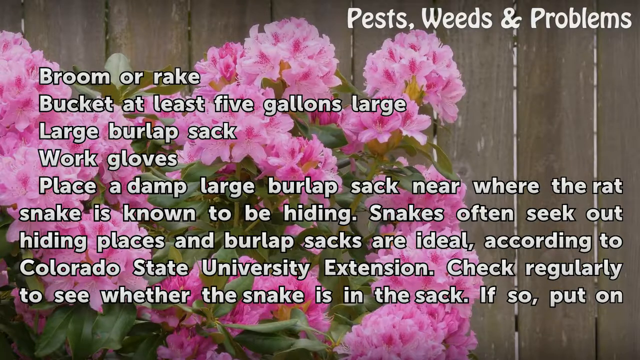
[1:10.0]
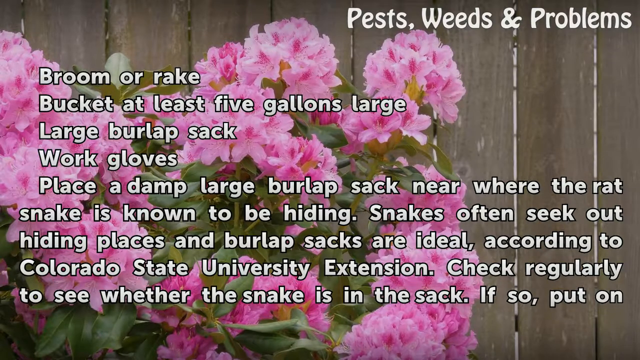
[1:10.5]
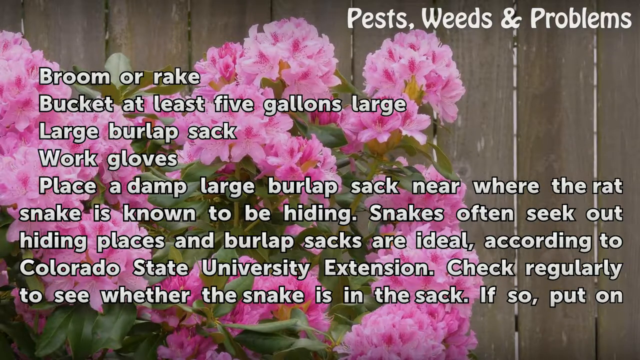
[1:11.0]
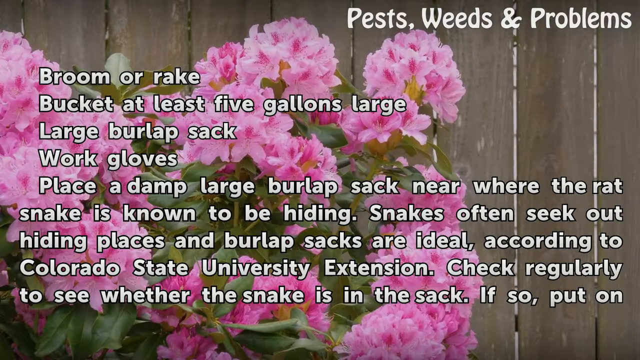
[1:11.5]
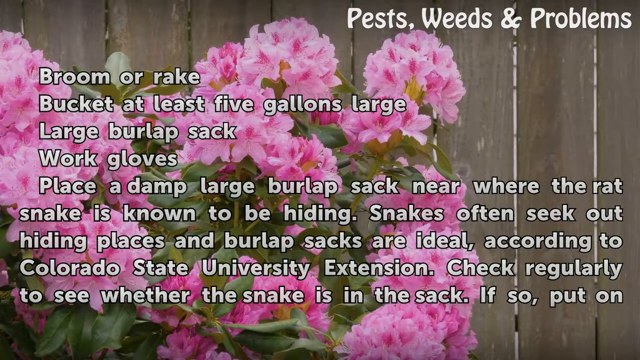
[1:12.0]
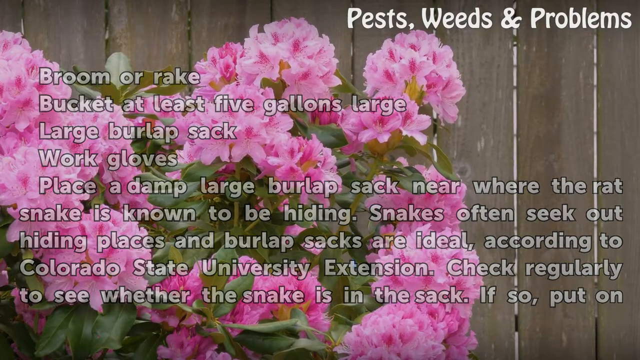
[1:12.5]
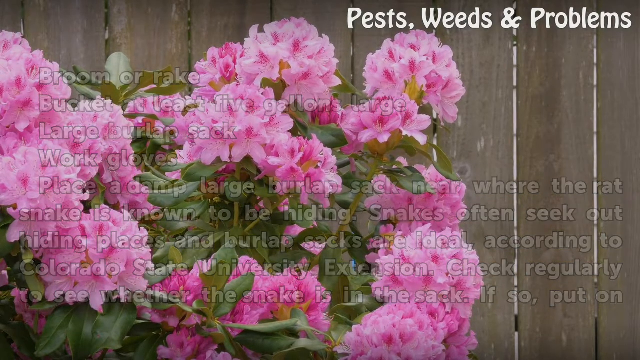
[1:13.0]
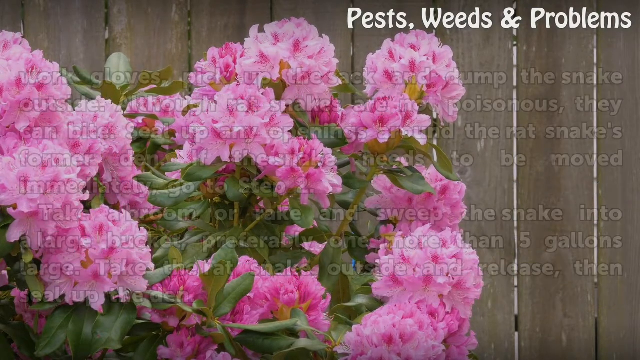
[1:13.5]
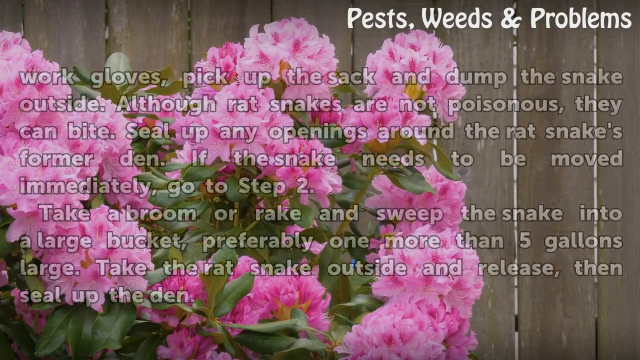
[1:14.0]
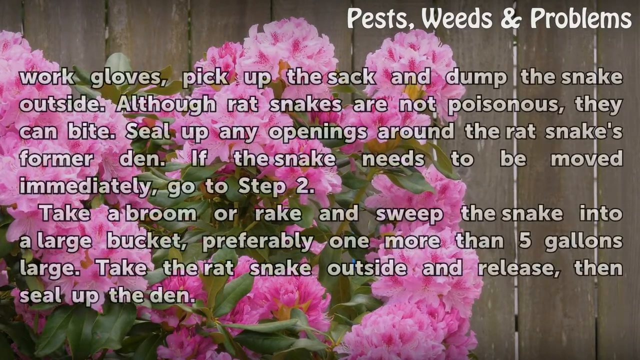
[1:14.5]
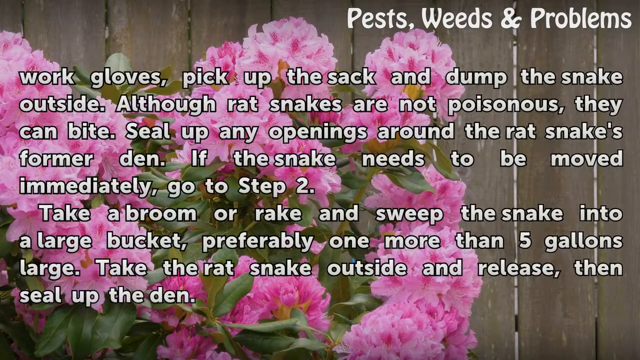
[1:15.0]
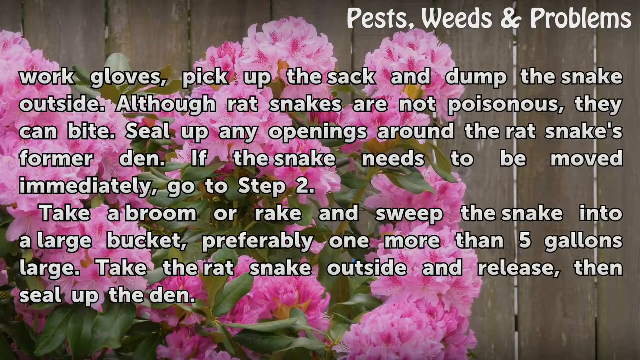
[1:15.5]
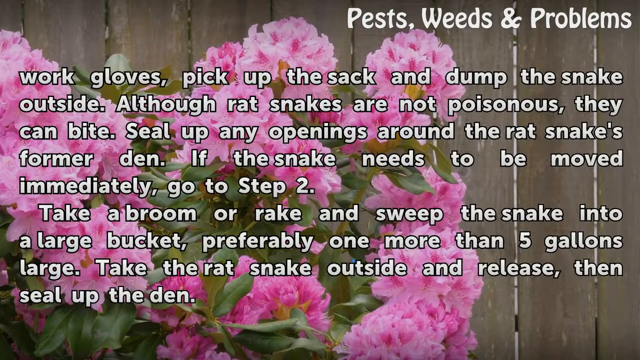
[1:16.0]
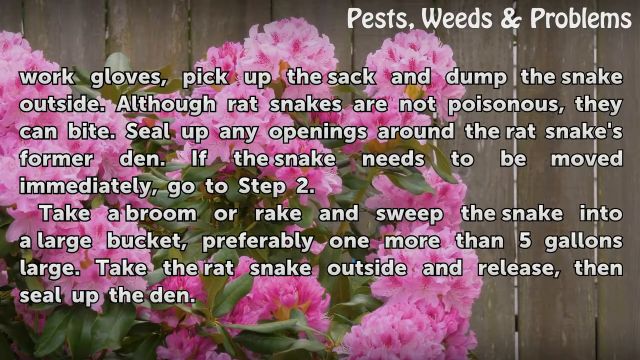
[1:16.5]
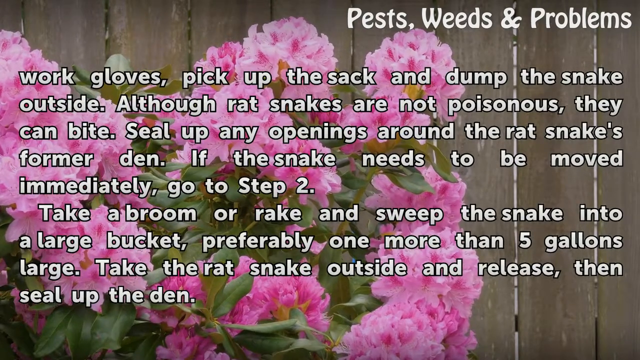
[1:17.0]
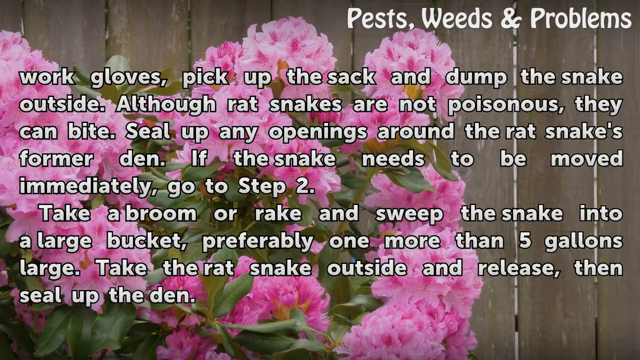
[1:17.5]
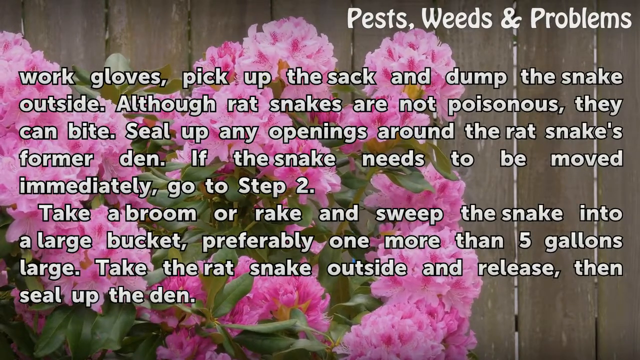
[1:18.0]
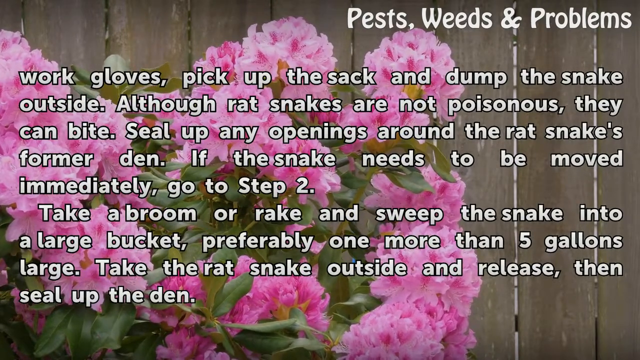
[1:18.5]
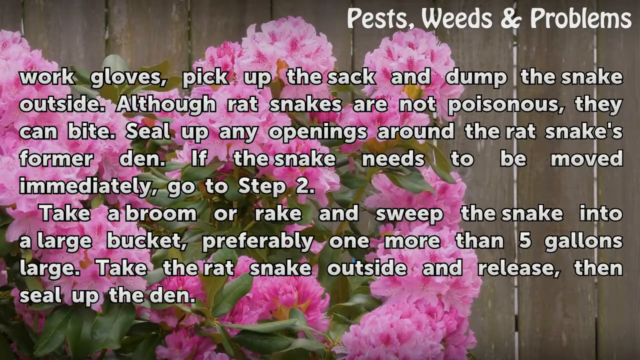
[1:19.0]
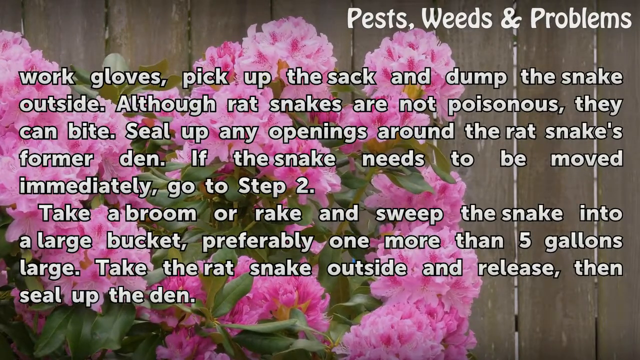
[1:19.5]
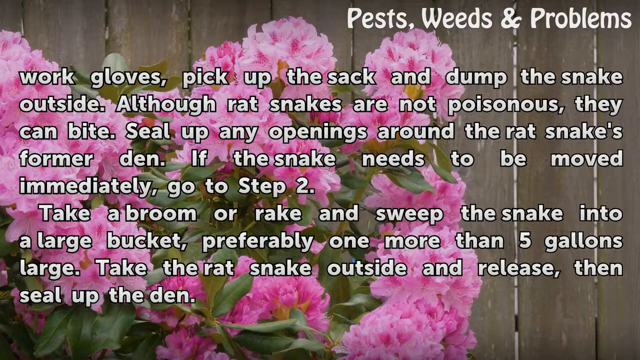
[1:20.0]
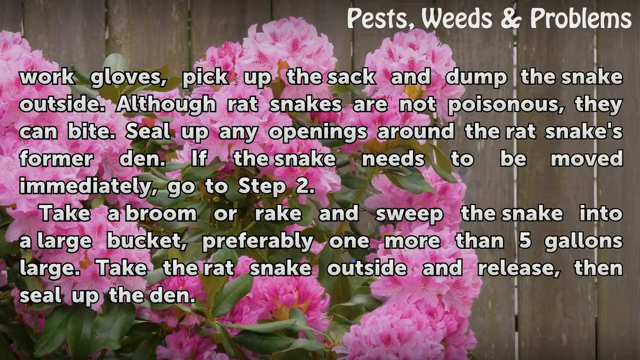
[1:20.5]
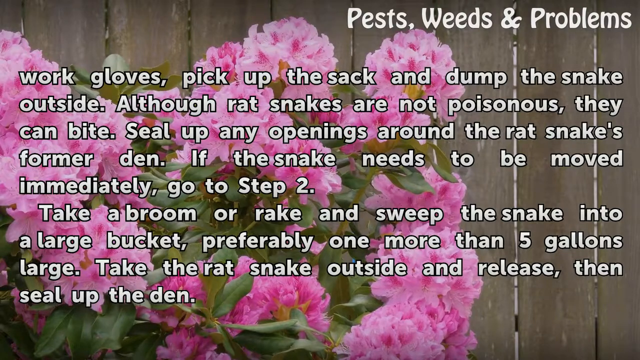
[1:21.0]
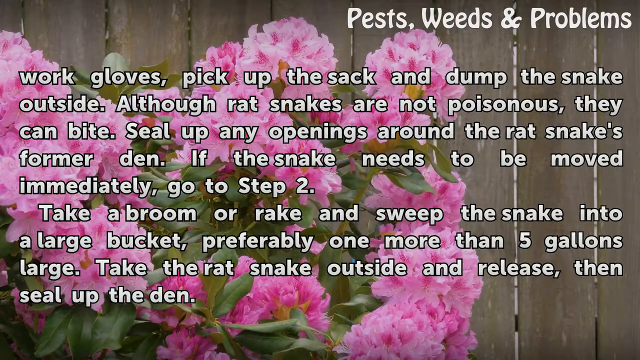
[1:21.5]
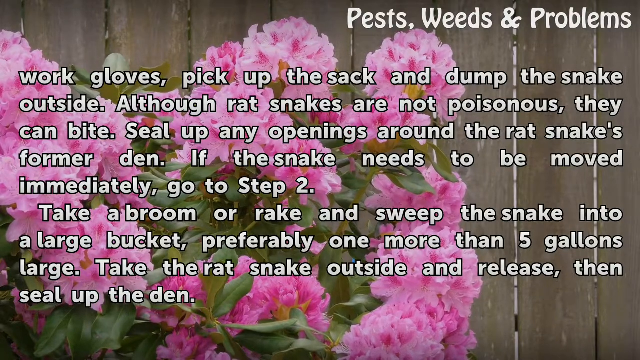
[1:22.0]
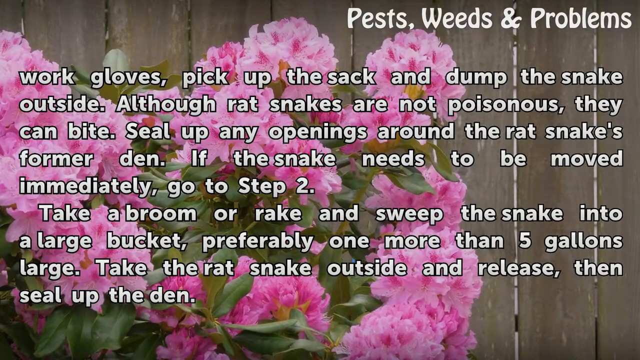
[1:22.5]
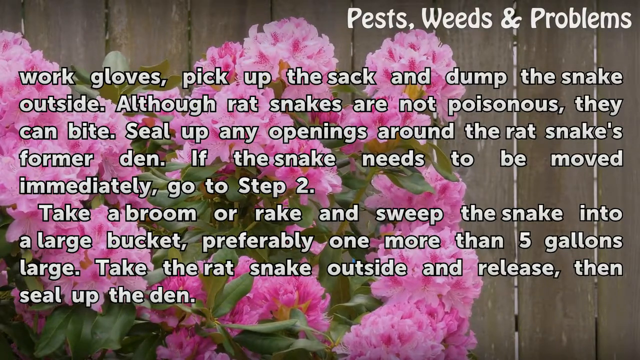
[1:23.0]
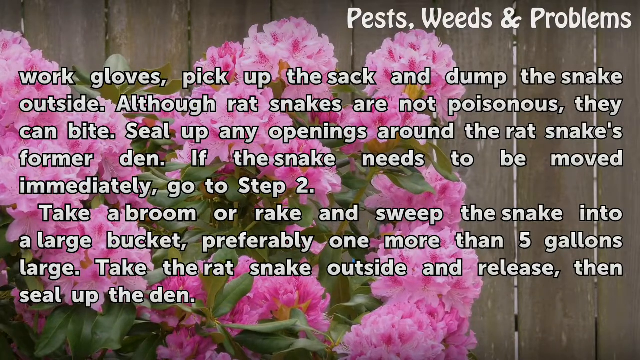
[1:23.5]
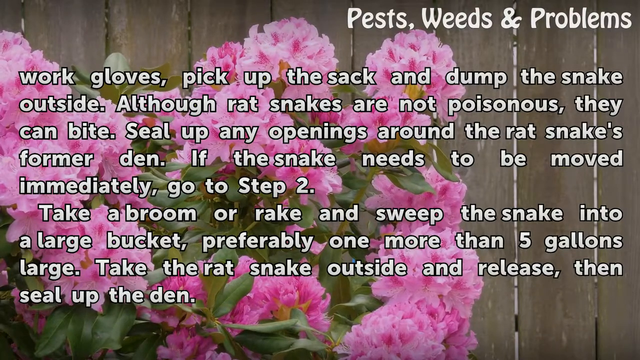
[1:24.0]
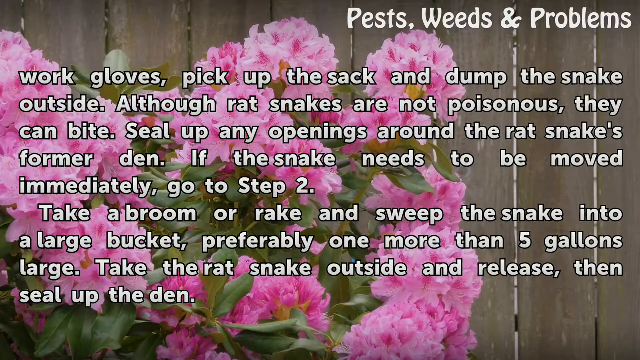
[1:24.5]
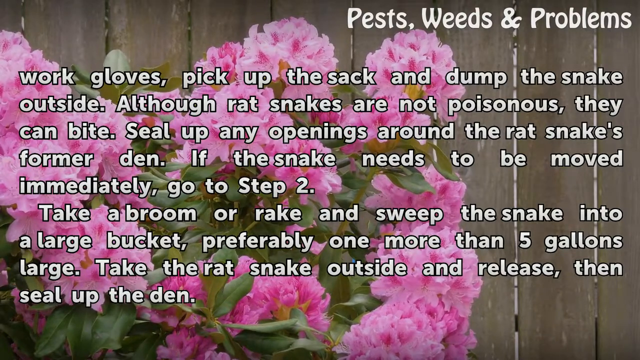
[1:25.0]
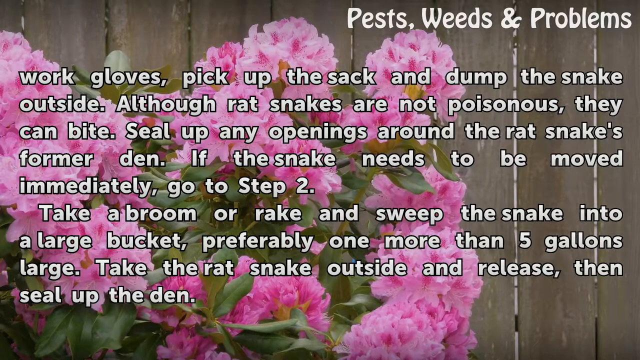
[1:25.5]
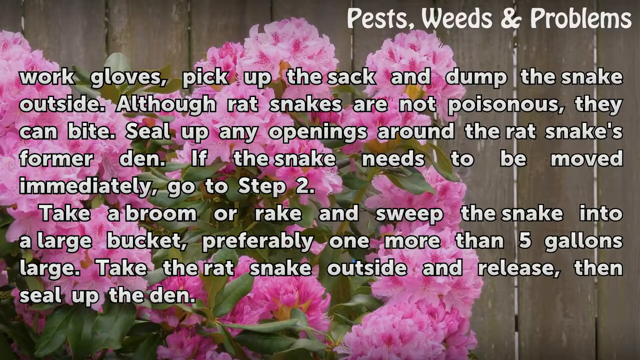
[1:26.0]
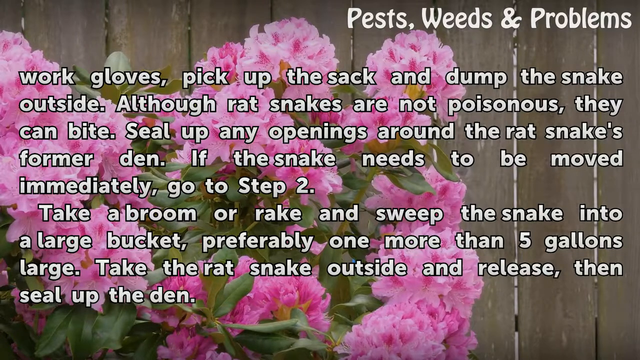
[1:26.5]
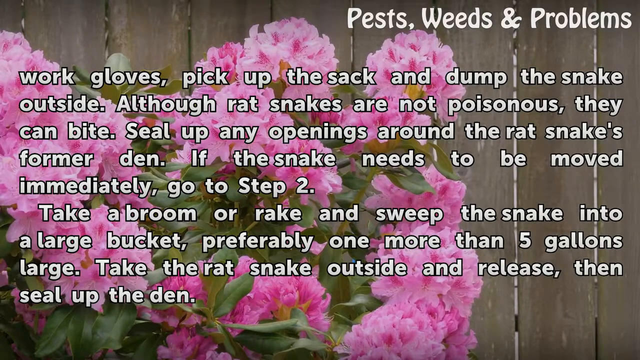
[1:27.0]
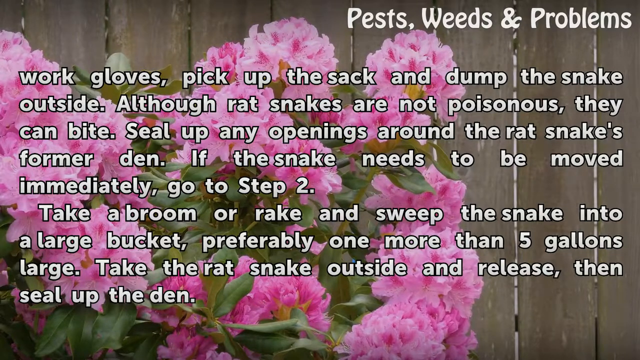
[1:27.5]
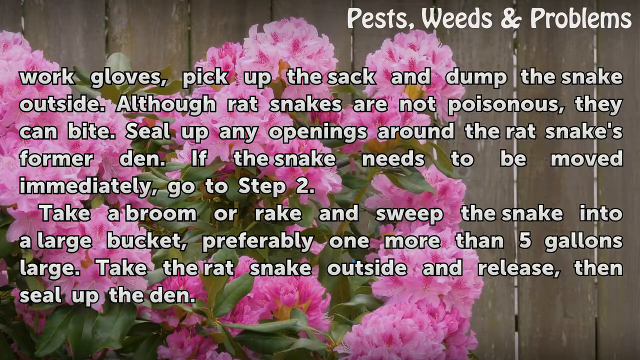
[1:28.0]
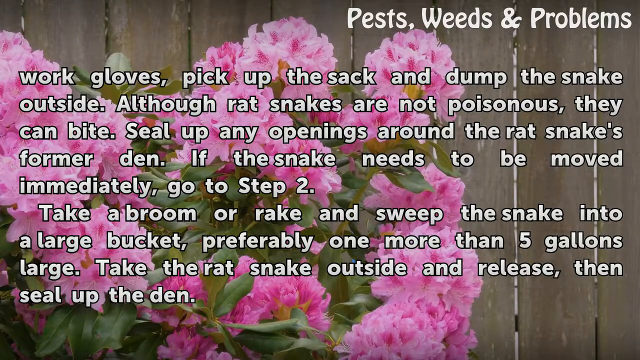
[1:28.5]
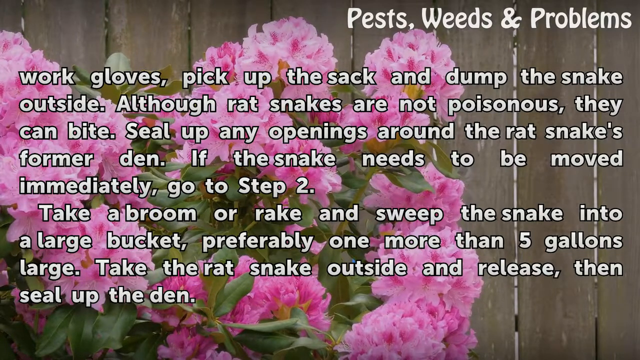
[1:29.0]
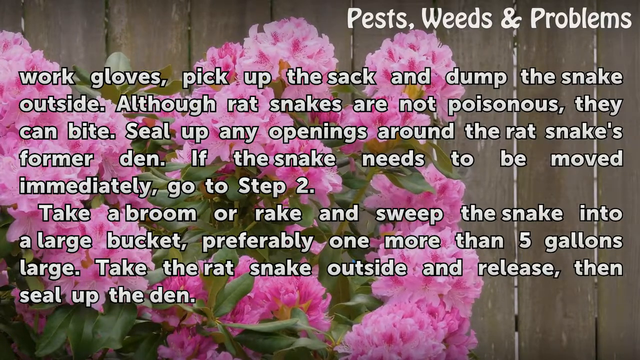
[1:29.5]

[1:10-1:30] The background is gray wooden fence paneling. White lettering at the top right says "Pests, Weeds, and Problems." Wording running from the middle down says "broom or rake, bucket at least five gallons large. Large burlap sack, work gloves, place a damp large burlap sack near where the rat snake is known to be hiding. Snakes often seek out hiding places and burlap sacks are ideal. According to Colorado State University extension, check regularly to see whether the snake is in the sack. If so, put on work gloves. Pick up the sack and dump the snake outside. Although rat snakes are not poisonous, they can bite. Seal up any openings around the rat snake's former den. If the snake needs to be moved immediately, go to step two. Take a broom or rake and sweep the snake into a large bucket, preferably one more than five gallons large. Take the rat snake outside and release and seal up the den."